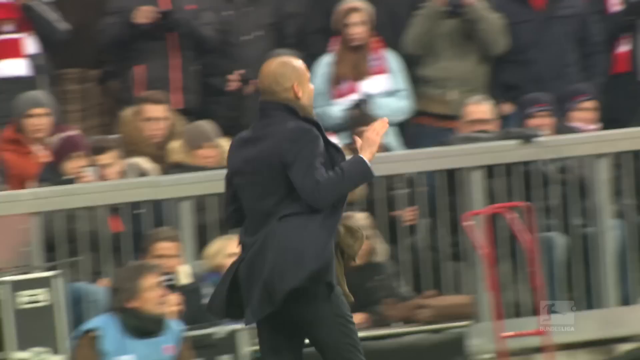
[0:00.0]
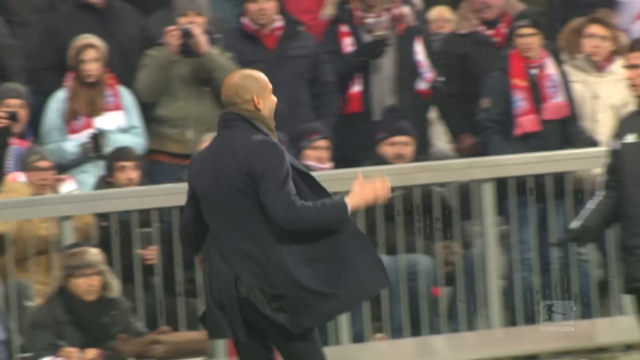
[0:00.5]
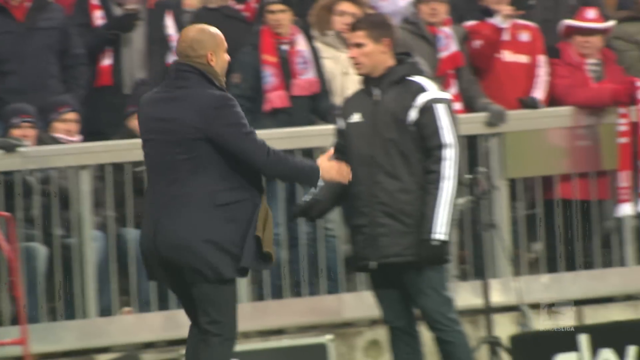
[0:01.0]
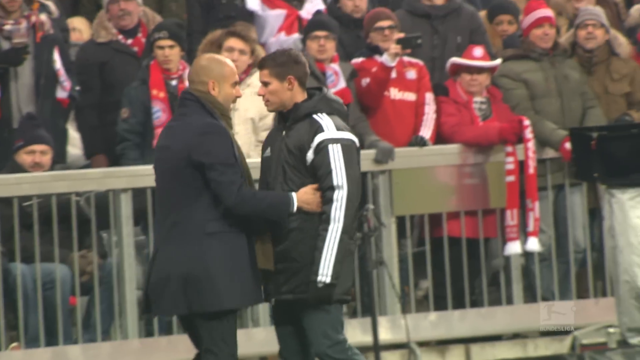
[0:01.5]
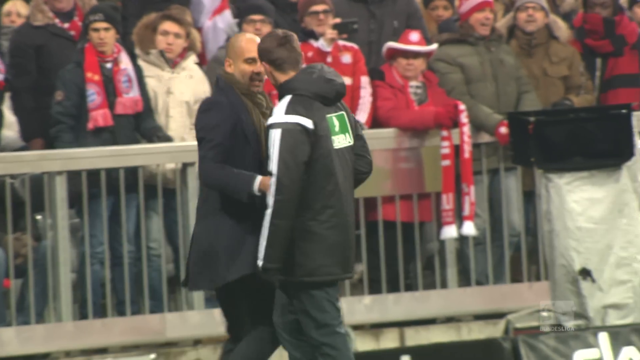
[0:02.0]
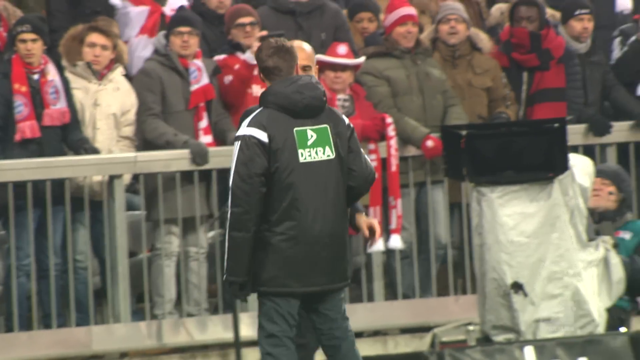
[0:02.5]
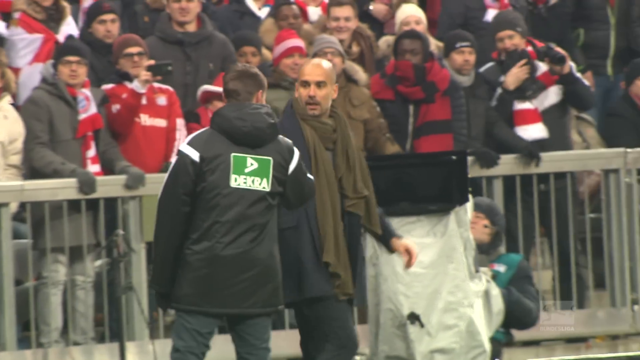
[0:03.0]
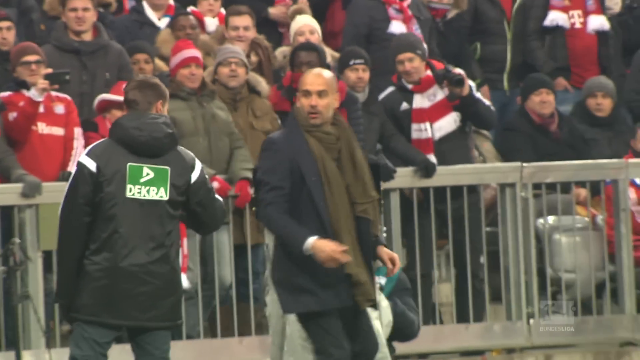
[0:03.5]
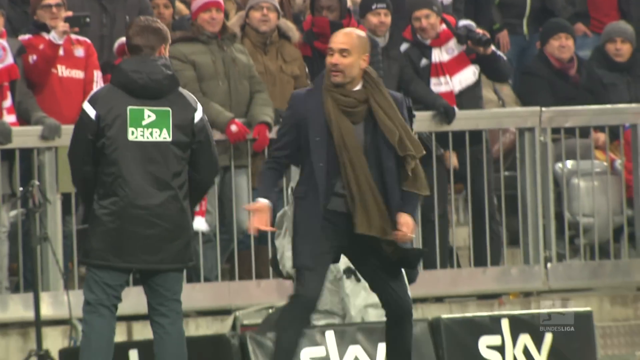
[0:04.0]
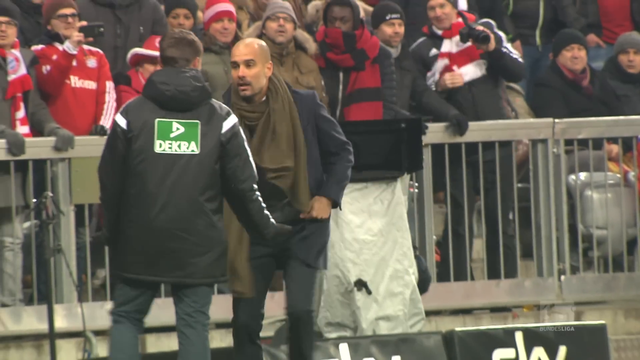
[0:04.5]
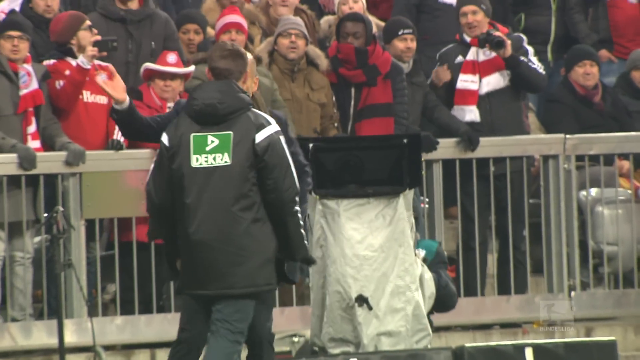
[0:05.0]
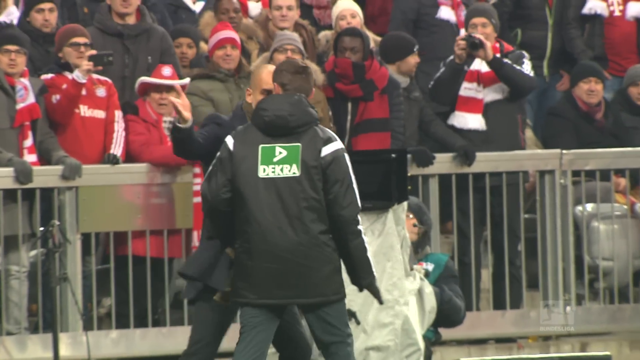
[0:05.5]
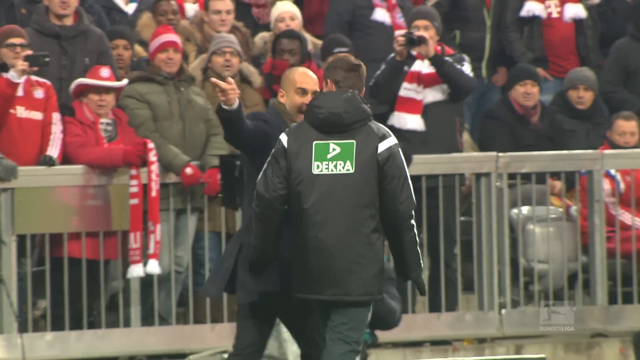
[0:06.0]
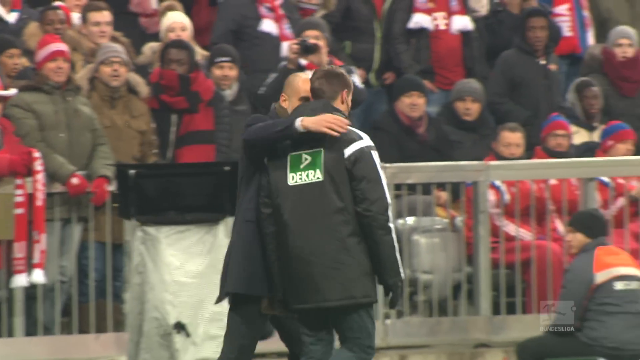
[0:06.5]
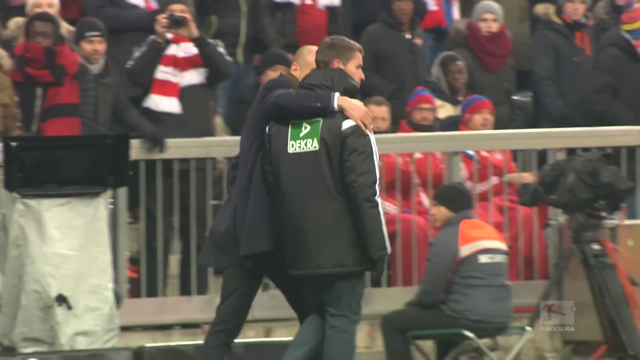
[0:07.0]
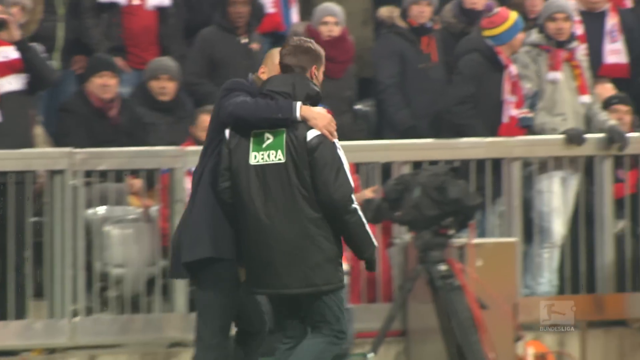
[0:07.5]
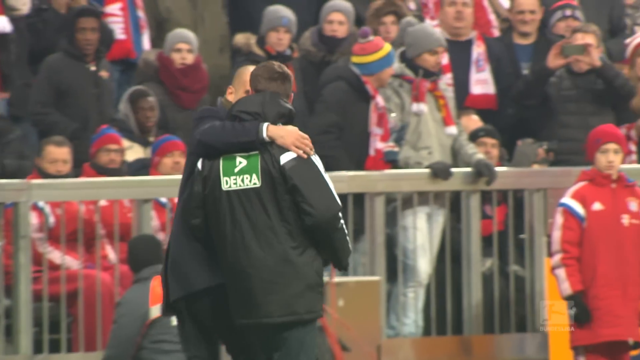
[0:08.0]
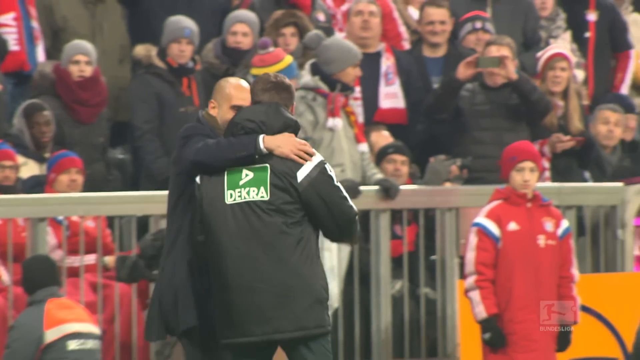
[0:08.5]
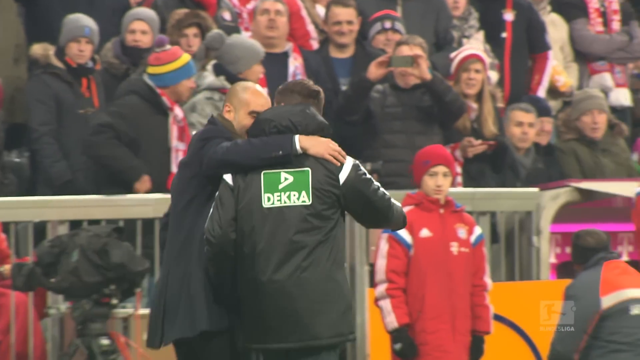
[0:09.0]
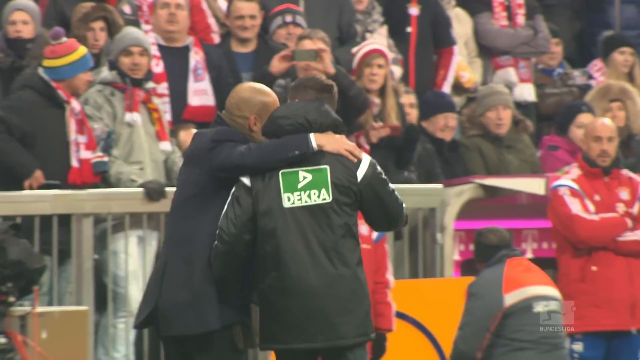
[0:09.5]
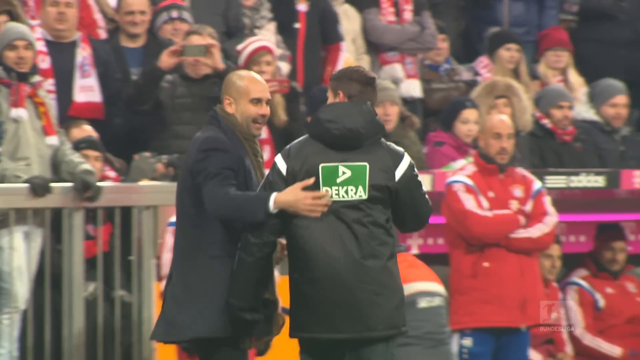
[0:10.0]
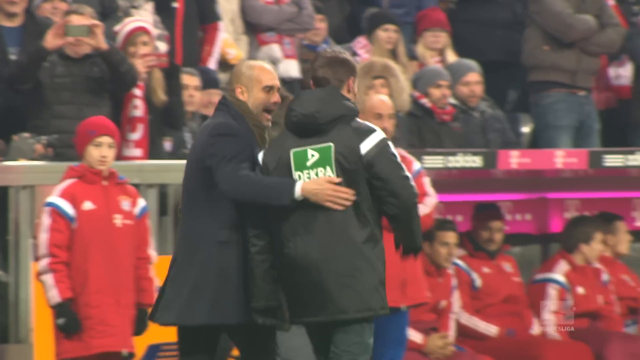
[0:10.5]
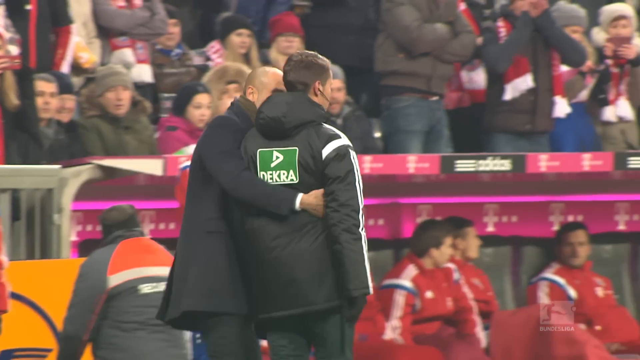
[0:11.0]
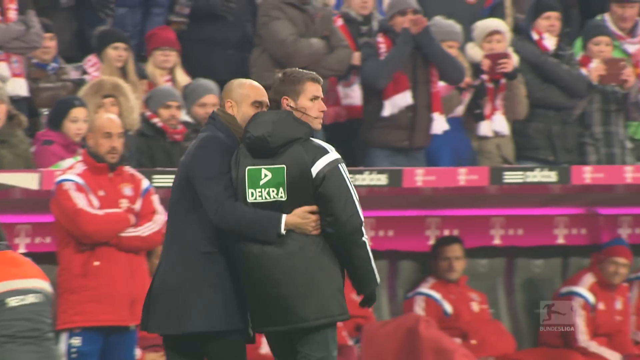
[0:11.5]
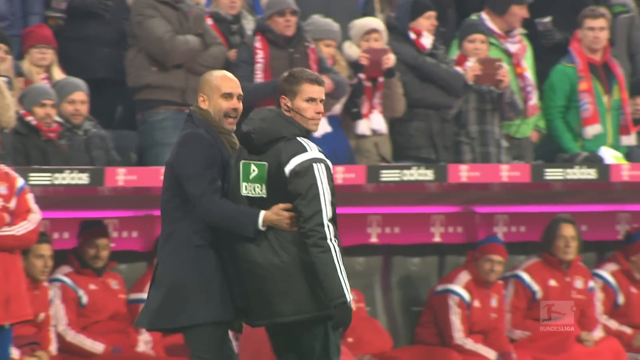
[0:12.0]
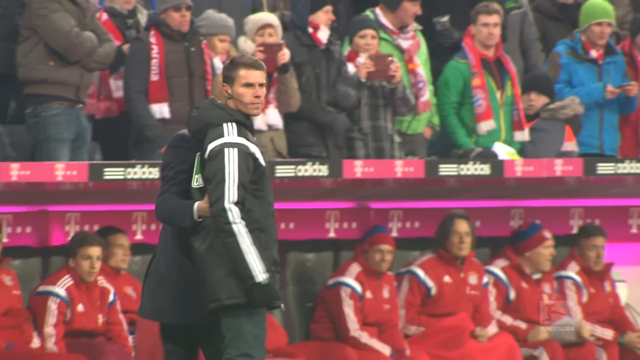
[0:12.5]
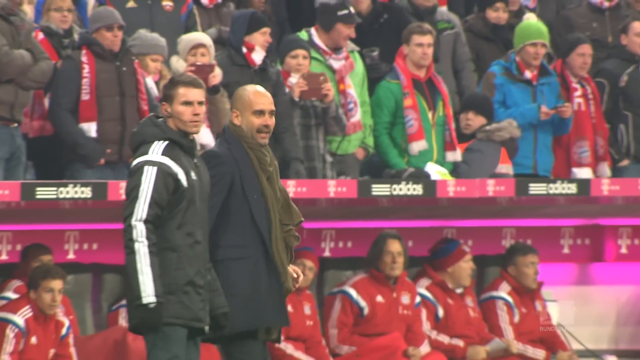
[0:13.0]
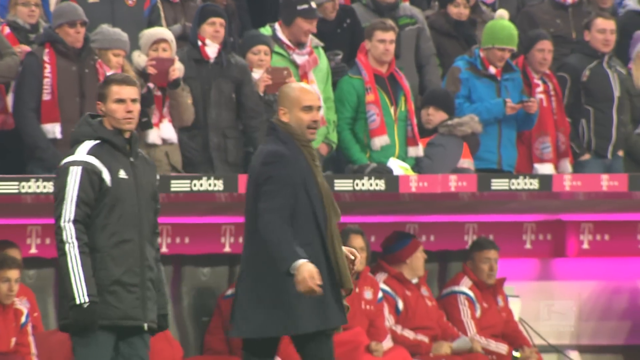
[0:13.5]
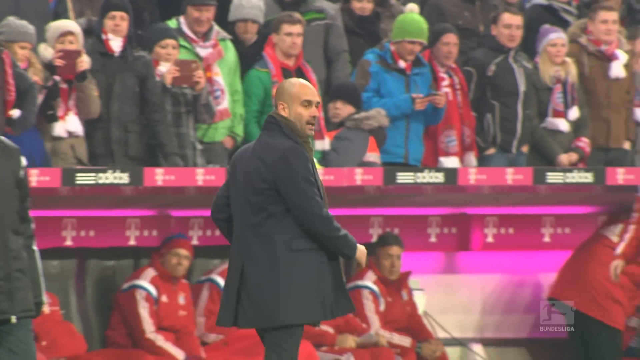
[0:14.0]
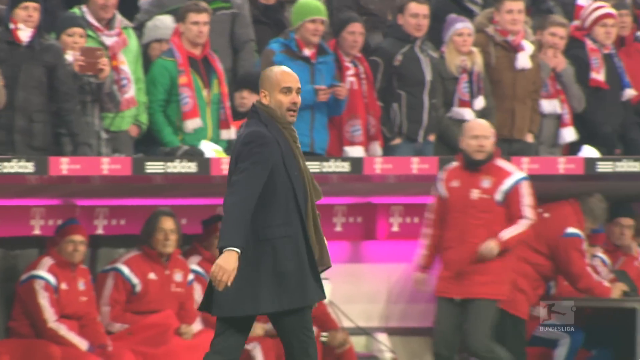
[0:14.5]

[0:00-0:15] A man who is bald or has a shaved head, wearing a long, dark jacket of some kind and a muffler or scarf, runs out onto the field and talks to a person in a black jacket with white piping along the outside of the sleeves. On the back of that person's jacket is a green square with the word "DEKRA" on it. The bald man seems to be in something of a hurry, moving his arms around and pointing in an animated way. He then puts his arm around the man in the Dekra jacket, and they walk along in front of what appears to be a grandstand or elevated fan seating area. Many players wear red jackets with blue and white rings around the sleeves. The two keep walking until the man with the green square on his back suddenly stops while the bald man continues forward.